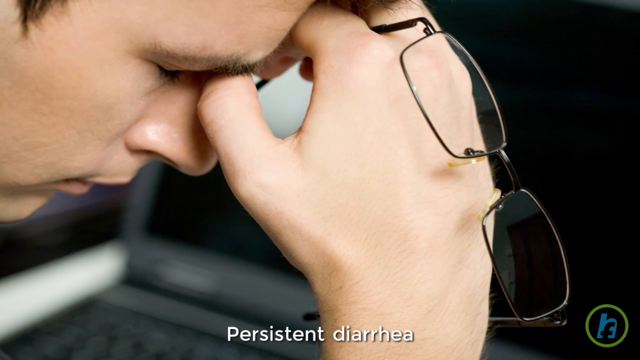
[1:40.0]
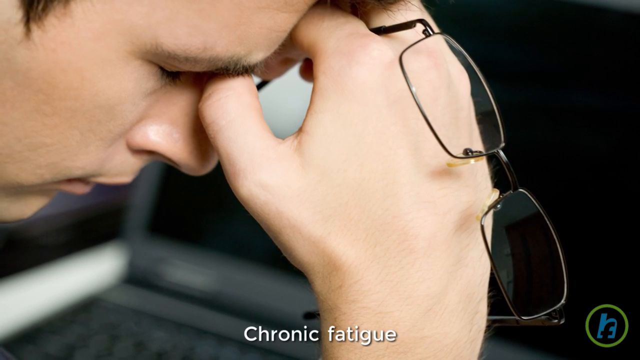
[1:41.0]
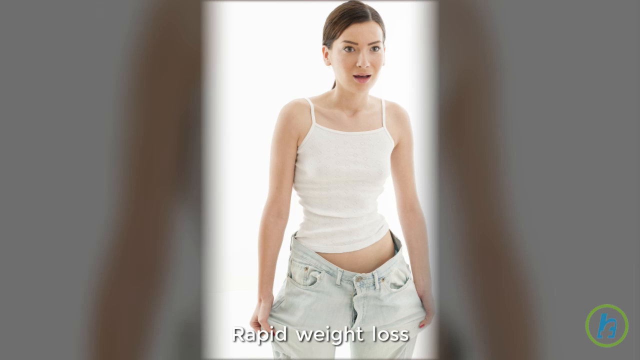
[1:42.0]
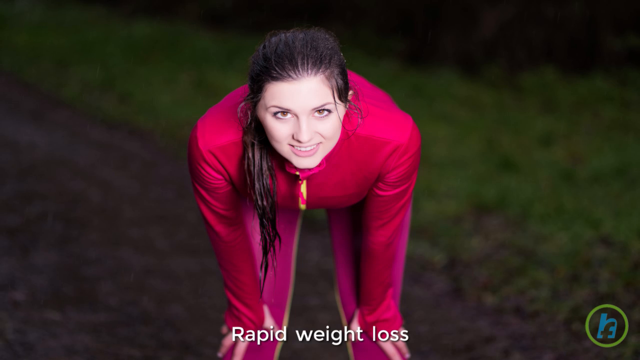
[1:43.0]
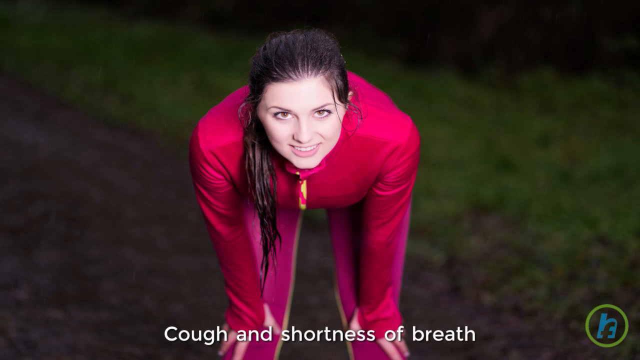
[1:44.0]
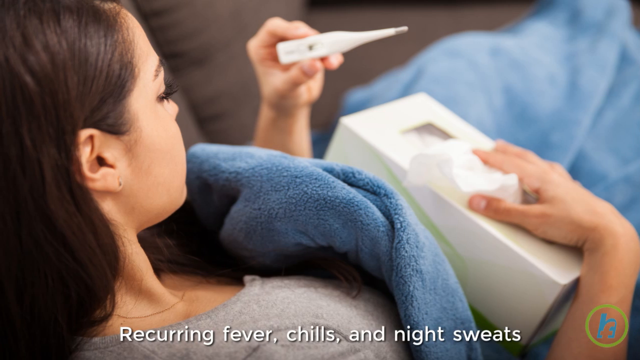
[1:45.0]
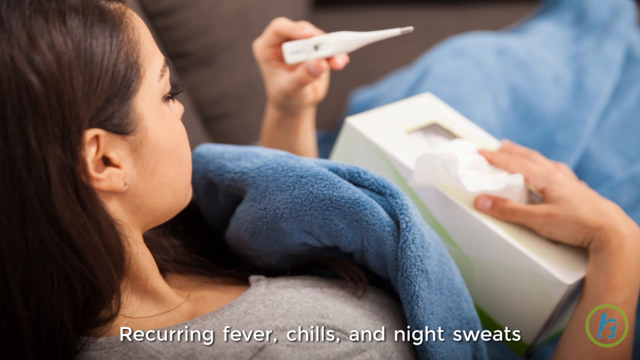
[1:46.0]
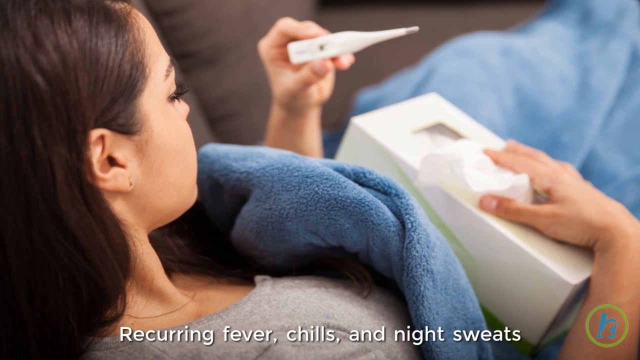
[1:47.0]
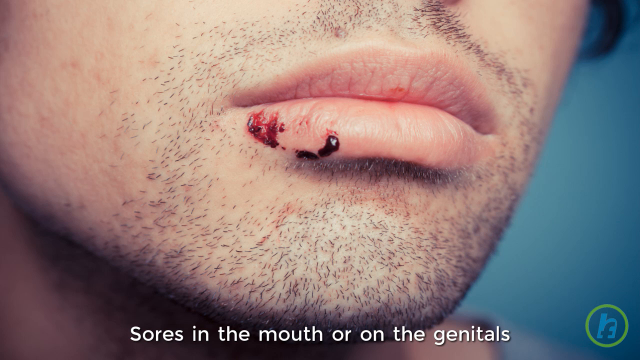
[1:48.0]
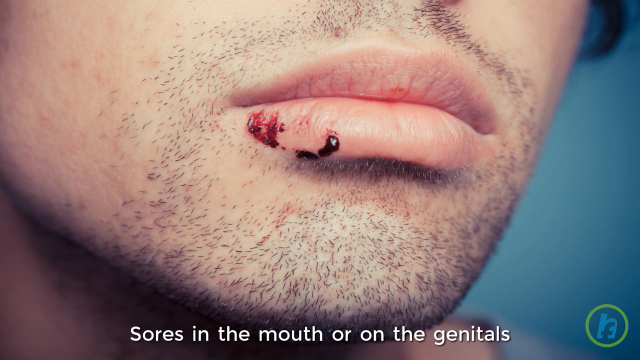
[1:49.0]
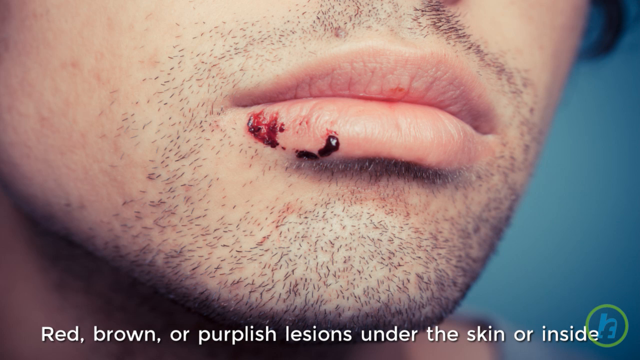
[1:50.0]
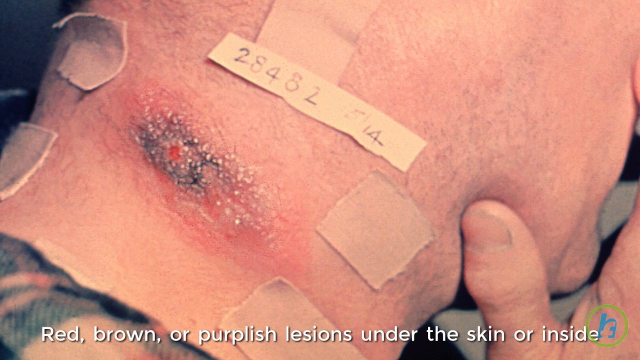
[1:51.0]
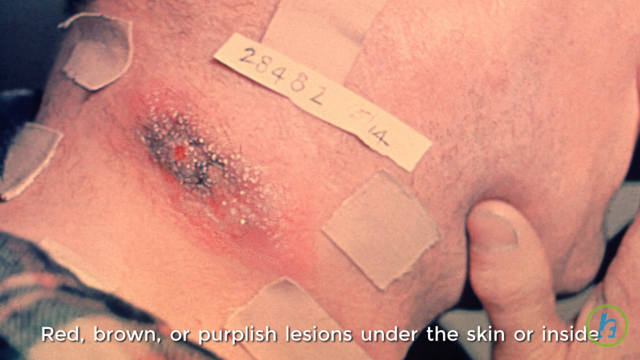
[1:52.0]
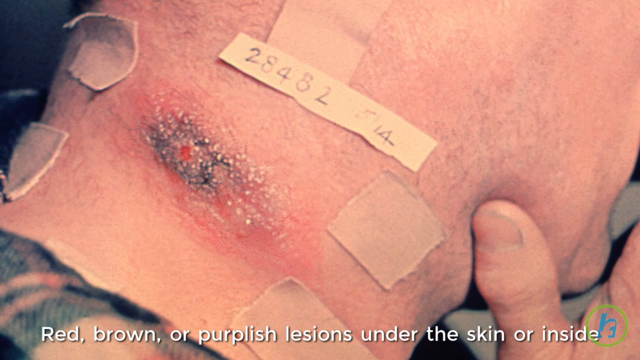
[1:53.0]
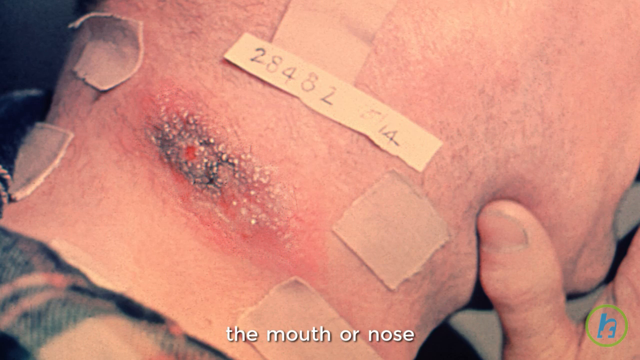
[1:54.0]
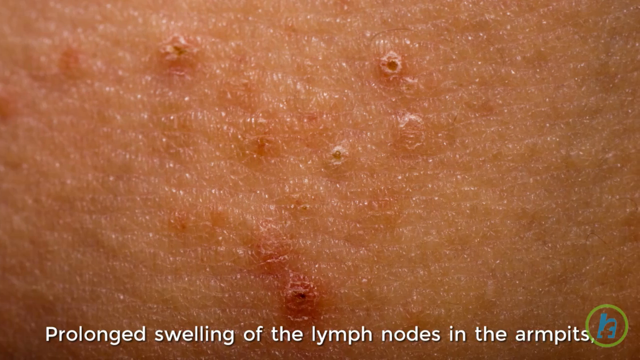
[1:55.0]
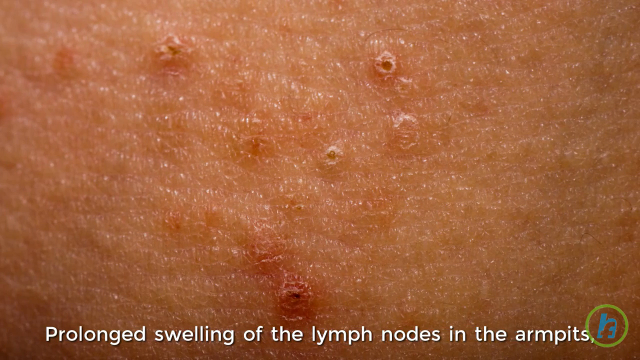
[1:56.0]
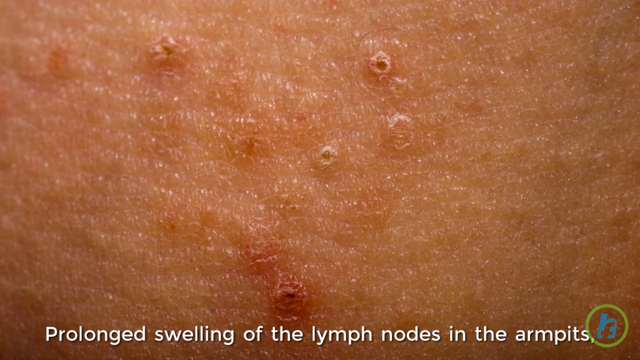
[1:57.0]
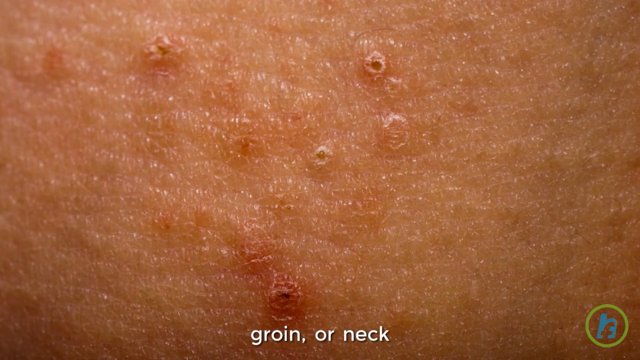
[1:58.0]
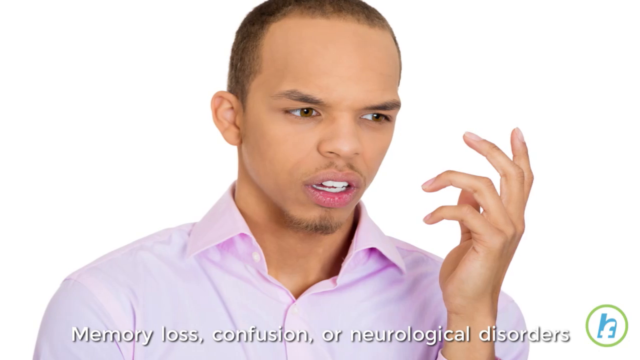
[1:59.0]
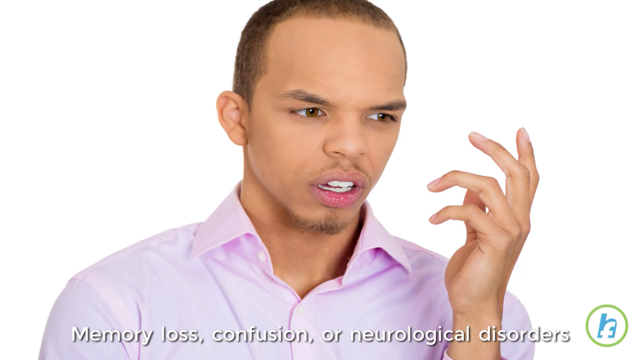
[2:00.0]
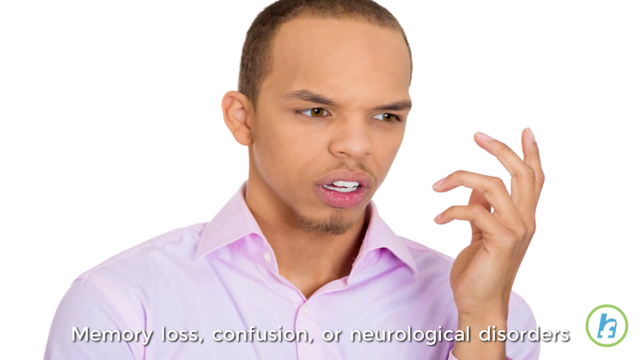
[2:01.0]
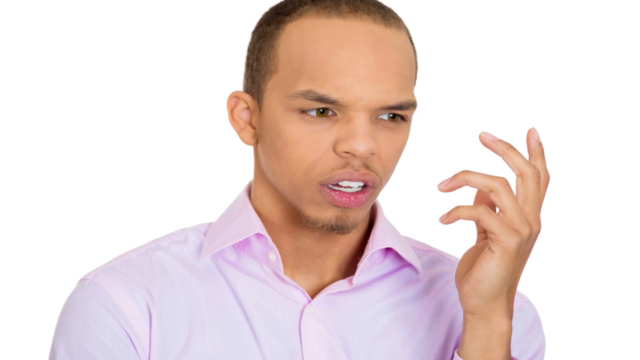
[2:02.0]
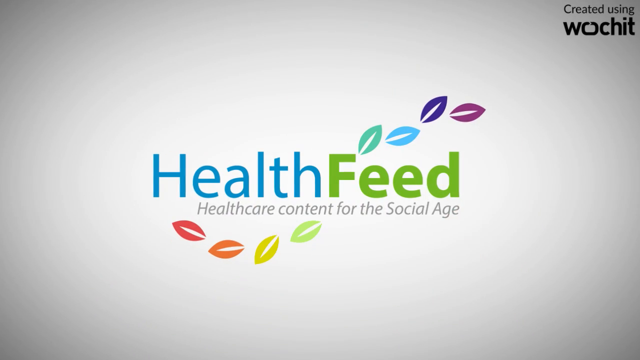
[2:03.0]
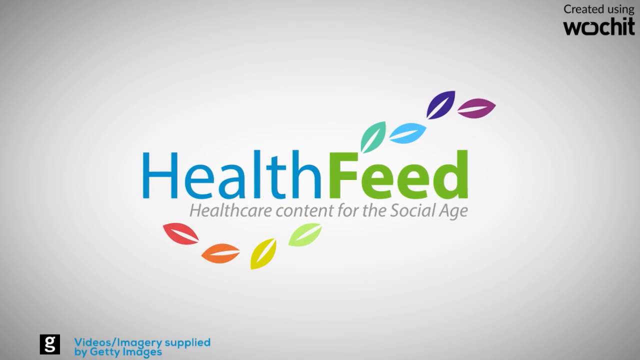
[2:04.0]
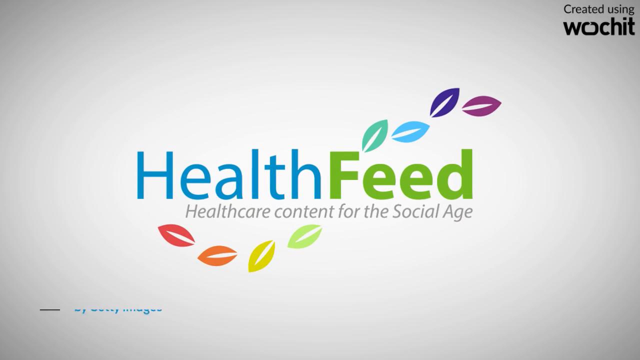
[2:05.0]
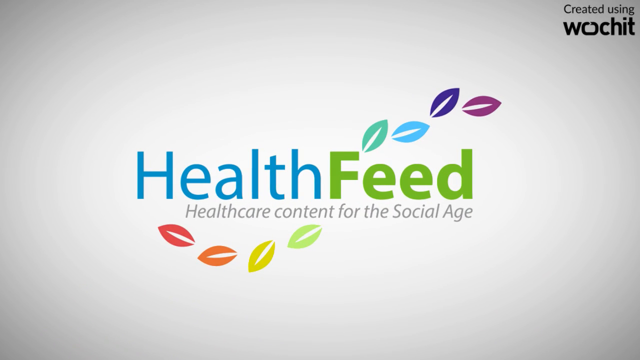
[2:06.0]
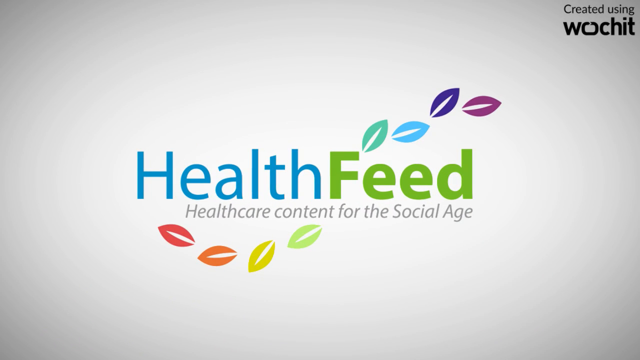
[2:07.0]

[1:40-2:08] A still photo shows a white man leaned over with his head on his hand, his eyes closed and resting on his fingers, grasping a pair of glasses. Only his head and his hand are visible in the image. Next is a still photo of a very thin, flat-chested woman wearing baggy jeans that are too big for her and a spaghetti-strapped tank top. Her mouth is agape, she is kind of staring off into the distance, and her arms are straight down by her sides. Another still photo follows of a woman bending over and smiling, looking directly into the camera, in a red outfit like a red jacket and red pants. After her, a still photo shows a woman looking at a thermometer; most of her back is turned towards the camera, so only a little of her right-side profile is seen.